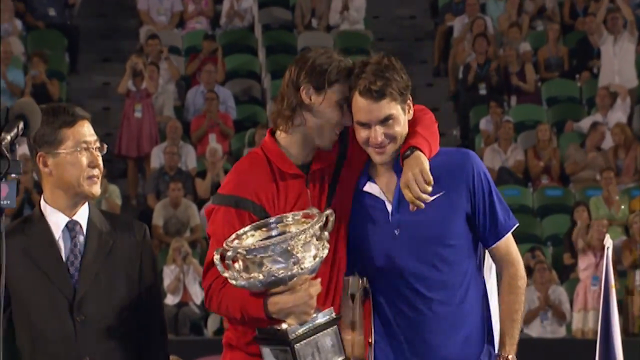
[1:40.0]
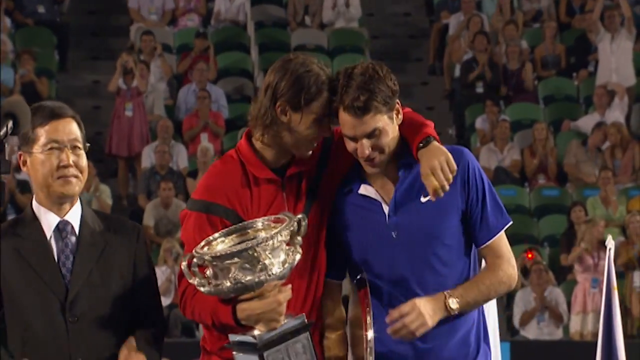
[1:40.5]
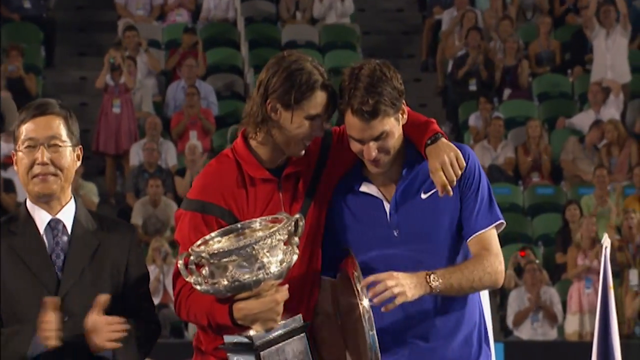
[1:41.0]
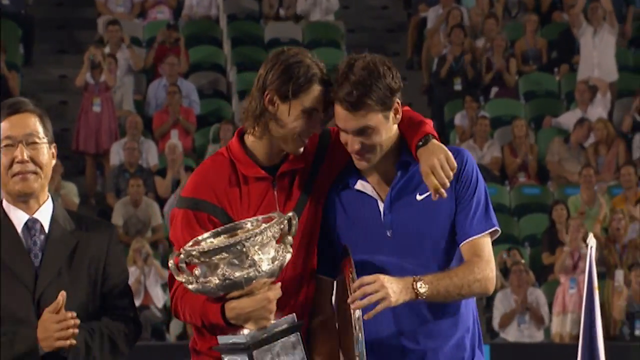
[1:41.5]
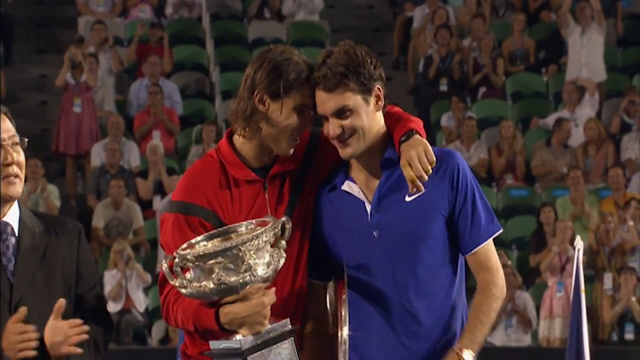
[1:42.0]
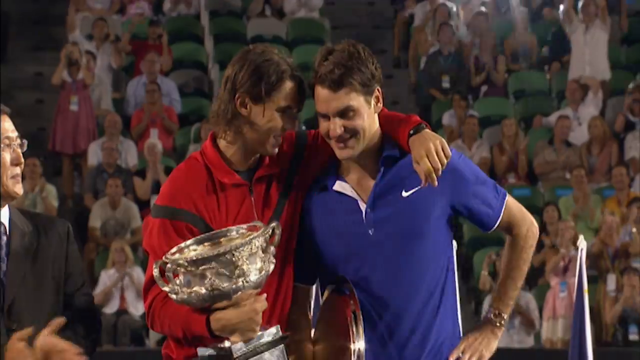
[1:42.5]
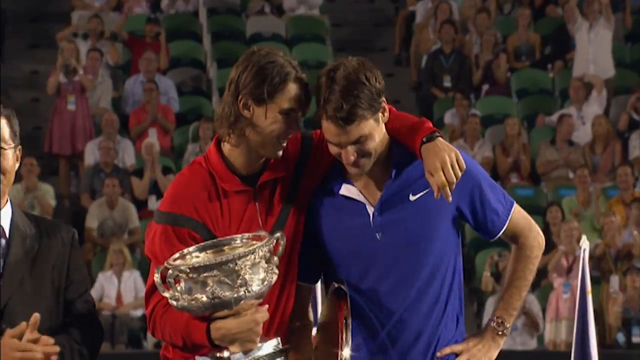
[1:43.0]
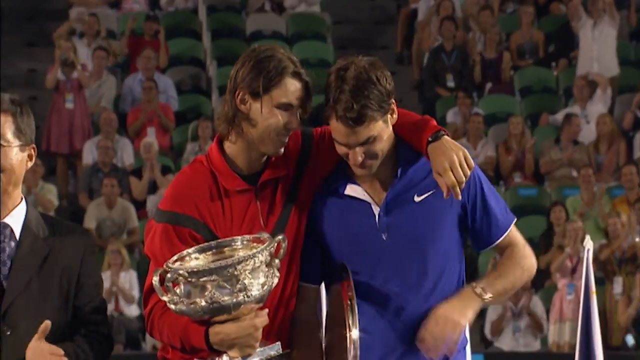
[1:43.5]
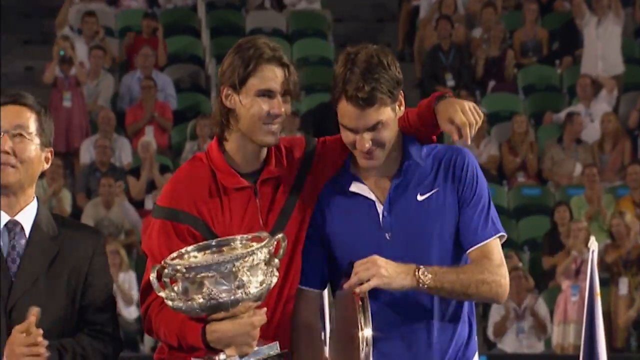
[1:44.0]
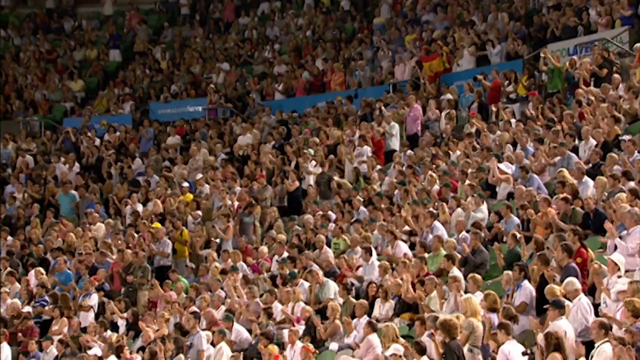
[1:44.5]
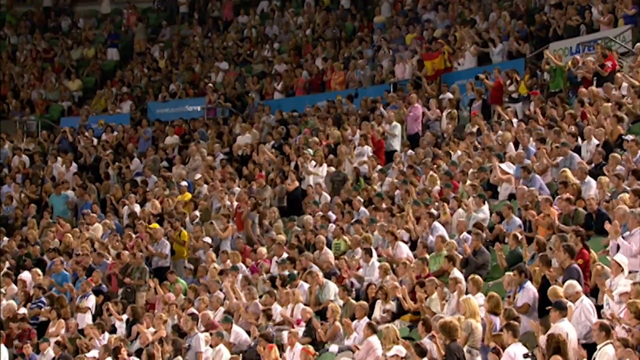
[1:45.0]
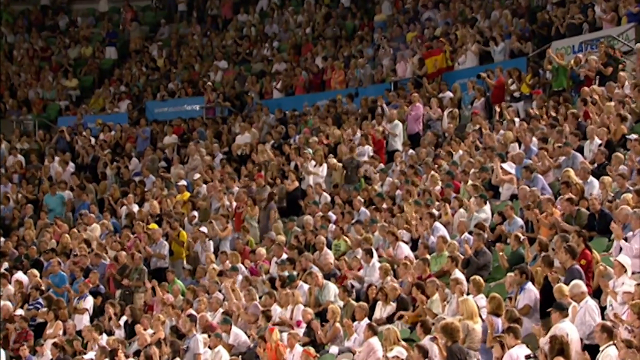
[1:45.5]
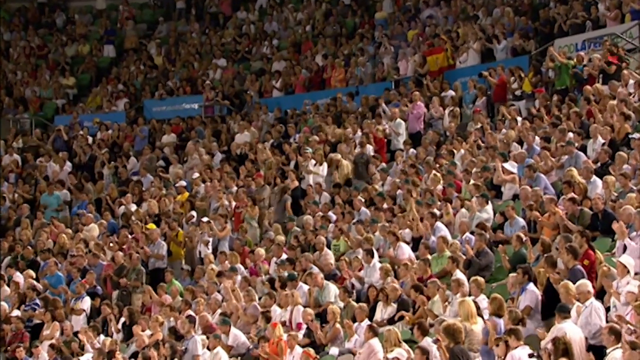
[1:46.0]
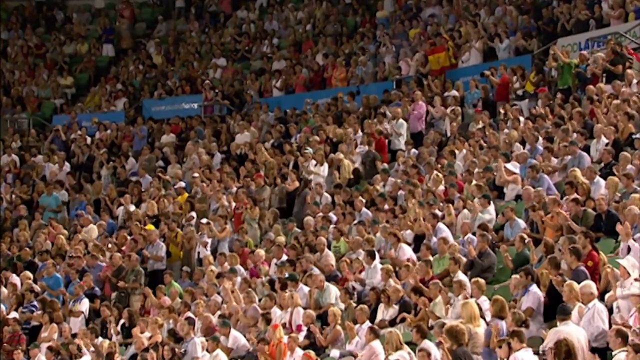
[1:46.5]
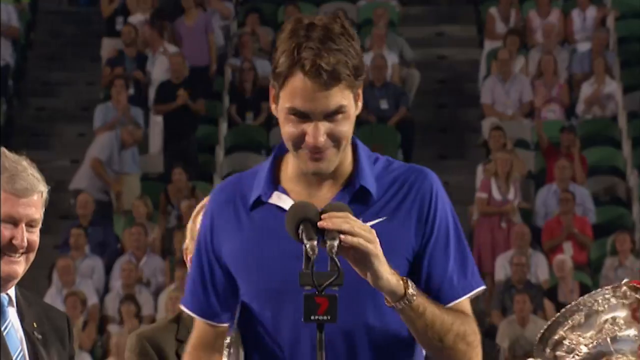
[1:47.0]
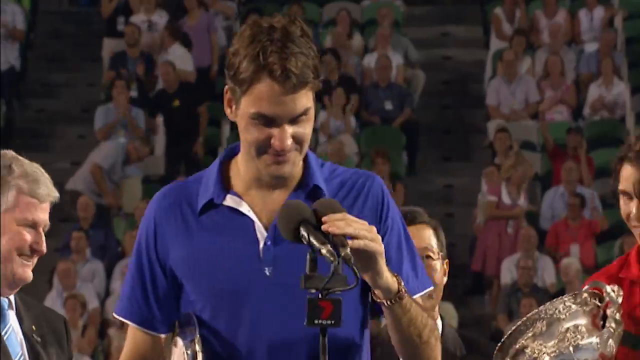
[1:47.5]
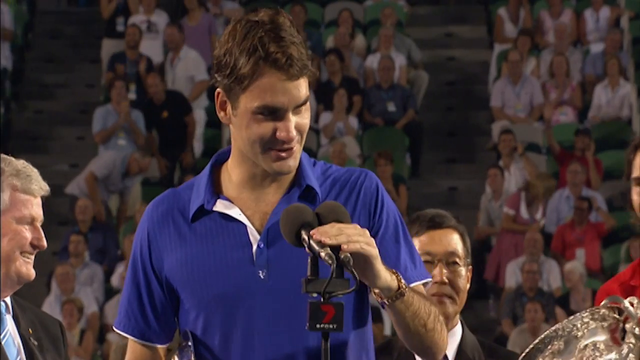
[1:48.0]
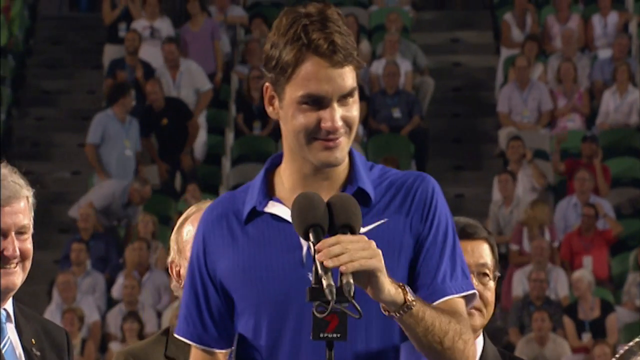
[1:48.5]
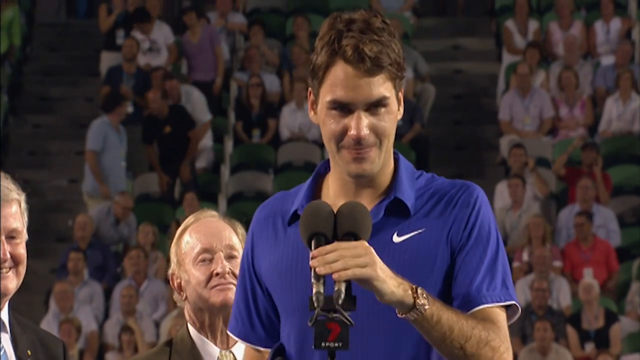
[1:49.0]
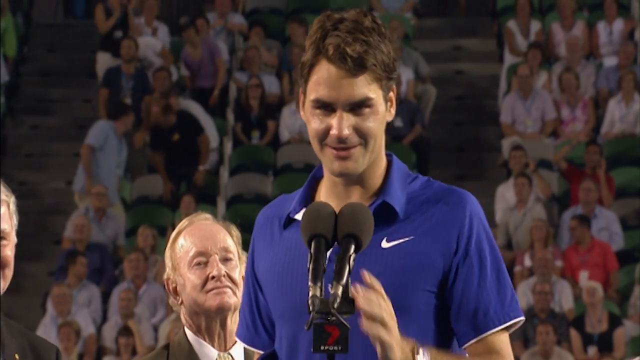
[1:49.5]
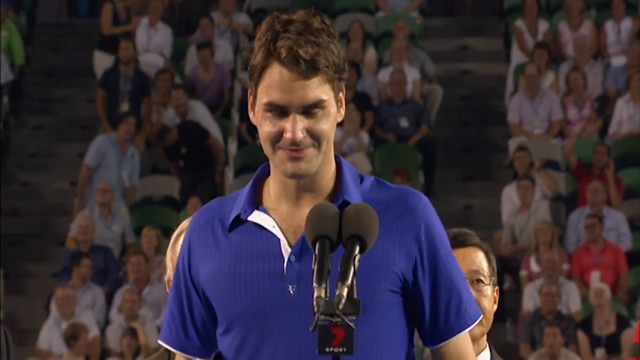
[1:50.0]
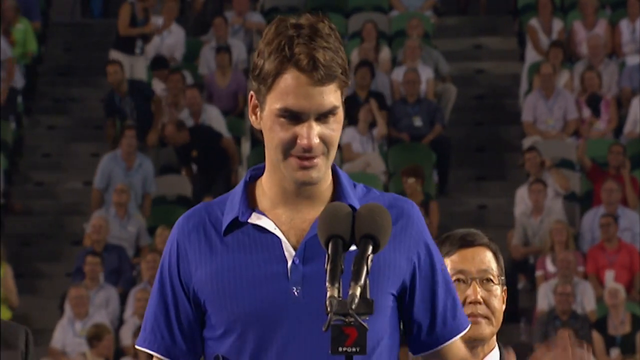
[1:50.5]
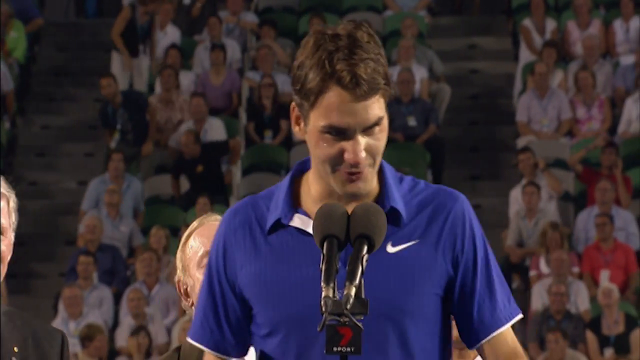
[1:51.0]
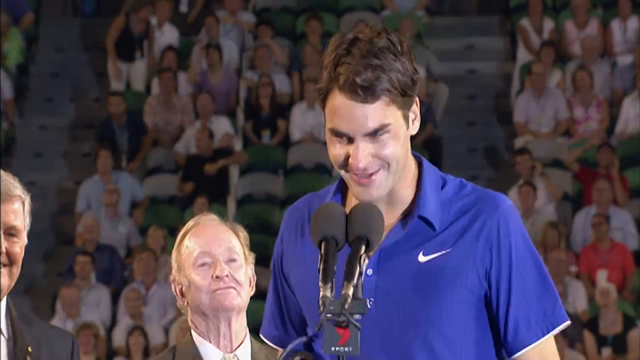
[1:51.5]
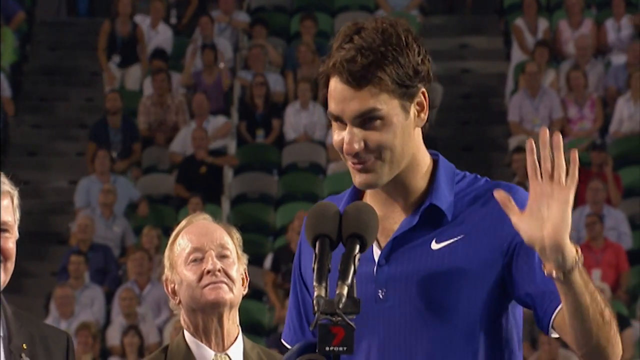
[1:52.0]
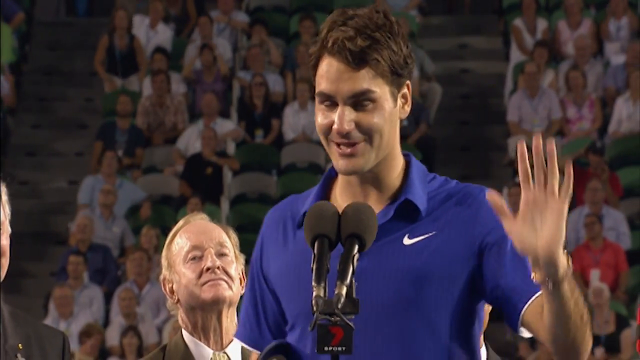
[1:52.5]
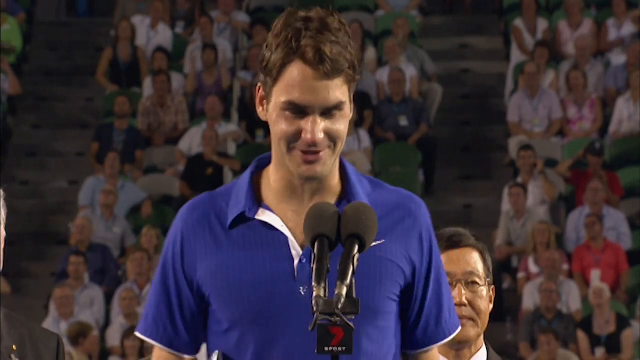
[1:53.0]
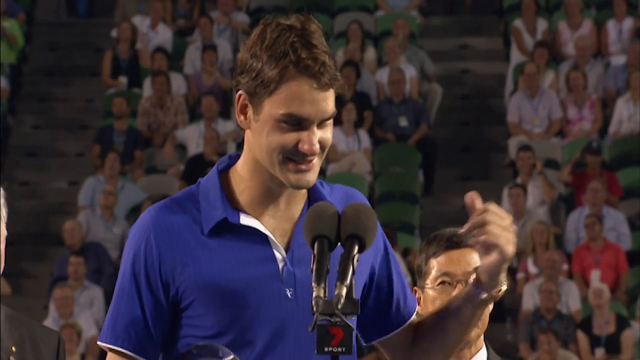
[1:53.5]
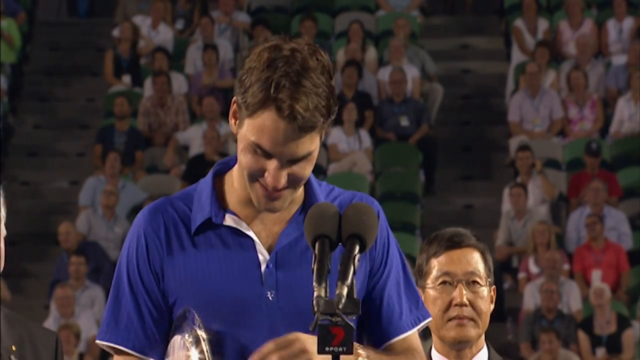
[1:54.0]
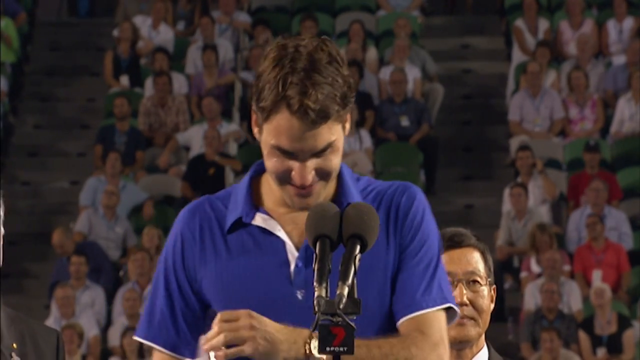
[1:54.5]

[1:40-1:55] Roger and the opponent talk to each other, both smiling; the winner finishes talking and gives Roger a turn. Fans are shown, some leaving the arena. Roger talks into the mic again. Most of the fans stand, then sit down as he speaks. He adjusts the mic and continues his speech, raising his hand to the fans. He wears a gold watch on his left arm. The winner is on his right and the managers are on his left. The fans keep cheering while some leave.